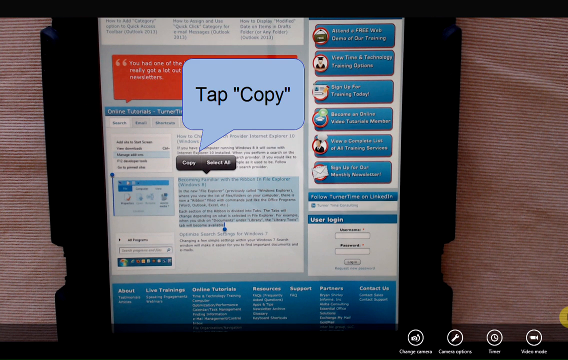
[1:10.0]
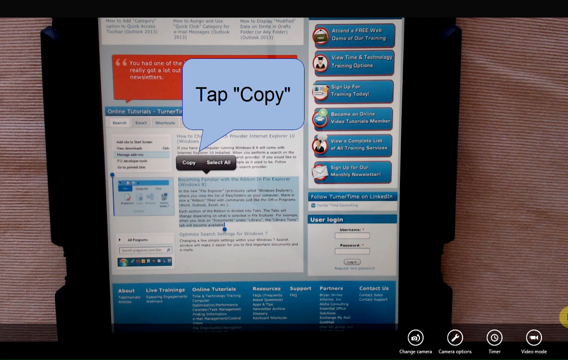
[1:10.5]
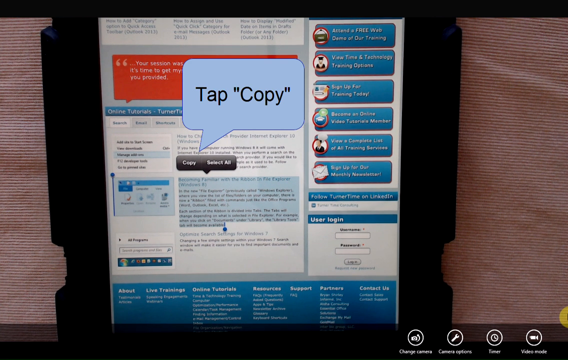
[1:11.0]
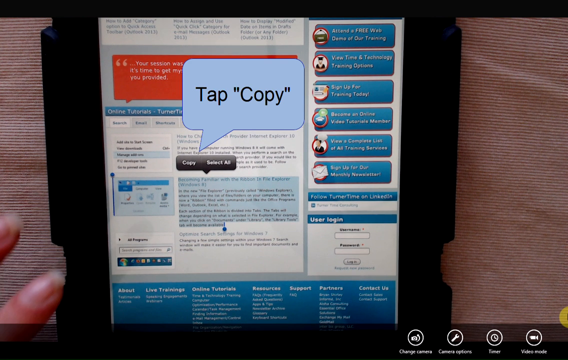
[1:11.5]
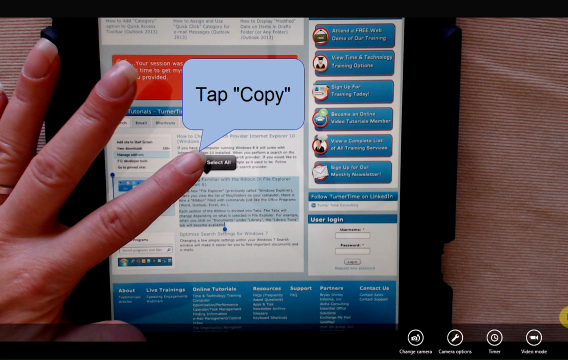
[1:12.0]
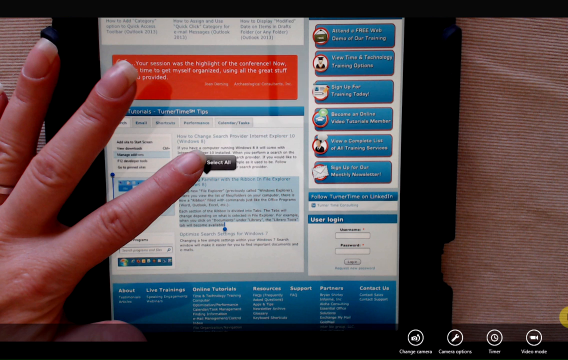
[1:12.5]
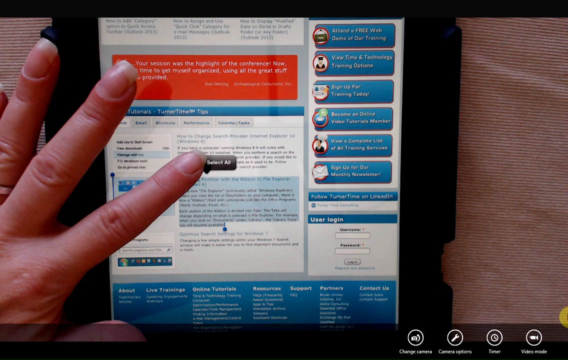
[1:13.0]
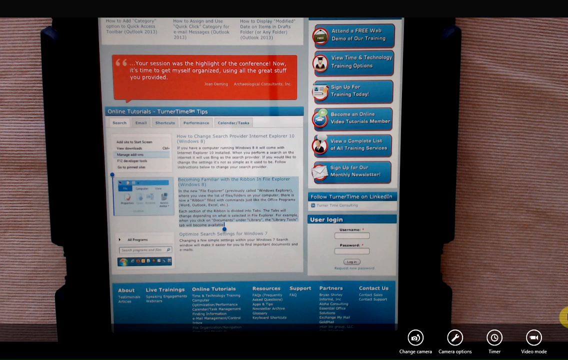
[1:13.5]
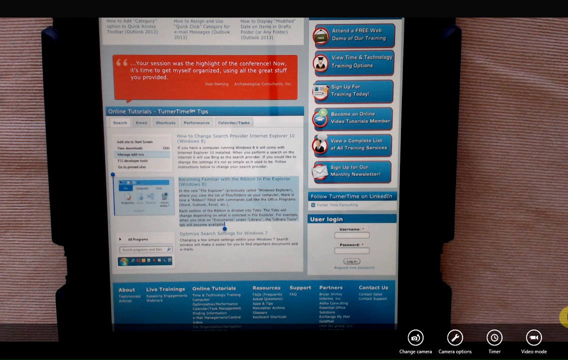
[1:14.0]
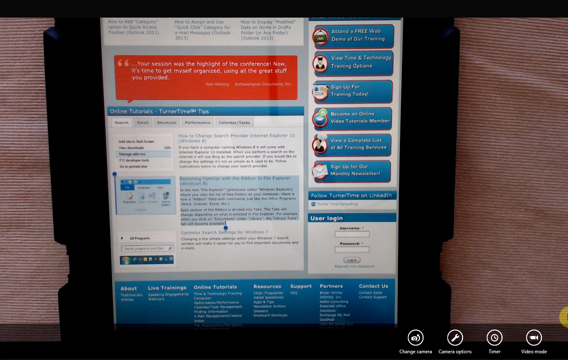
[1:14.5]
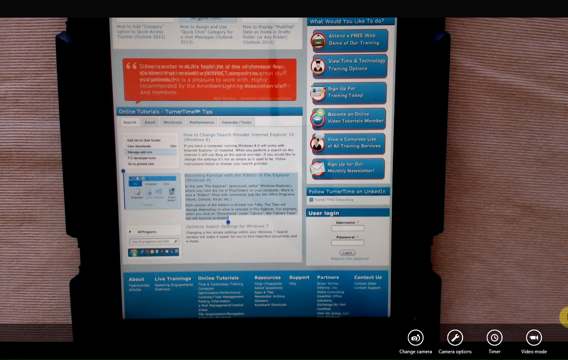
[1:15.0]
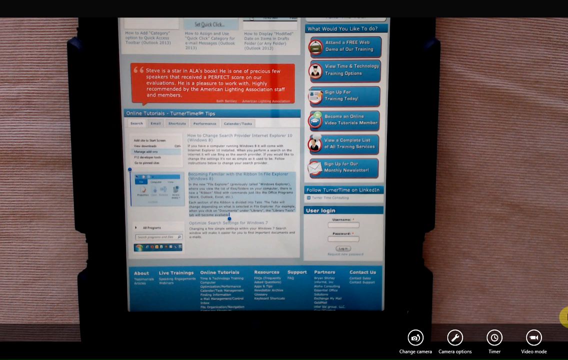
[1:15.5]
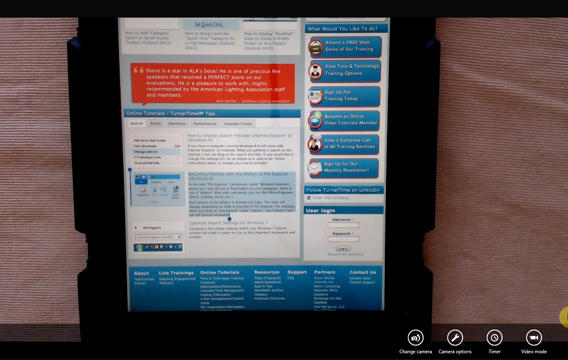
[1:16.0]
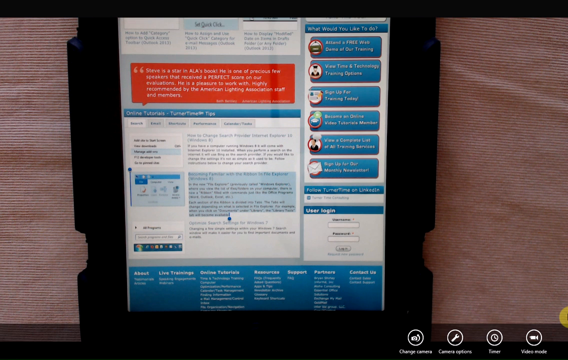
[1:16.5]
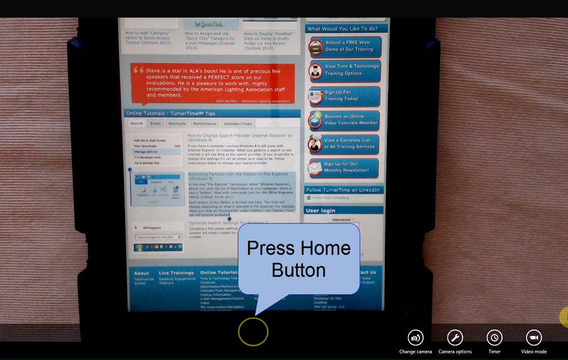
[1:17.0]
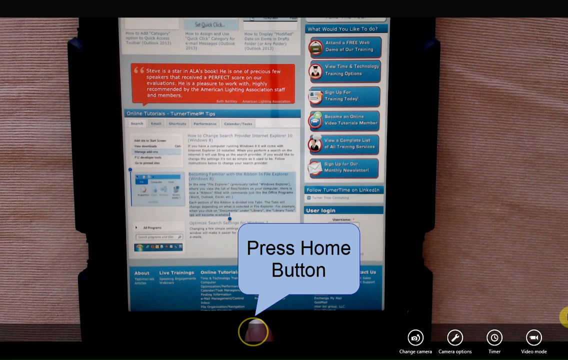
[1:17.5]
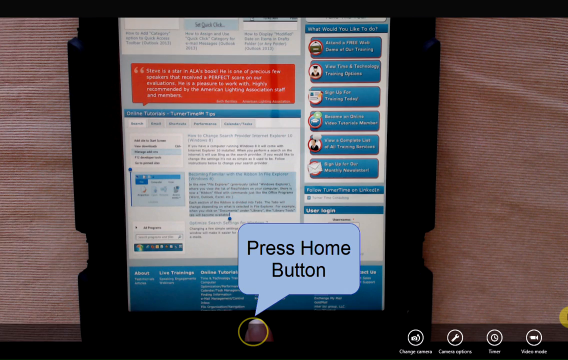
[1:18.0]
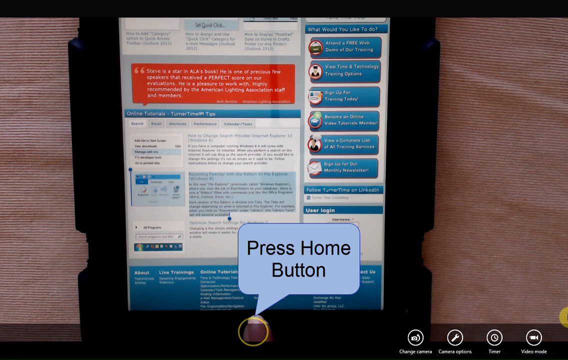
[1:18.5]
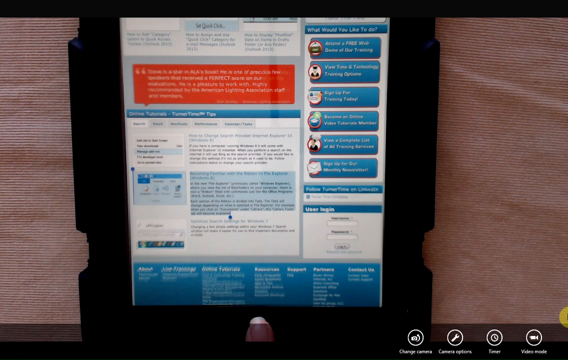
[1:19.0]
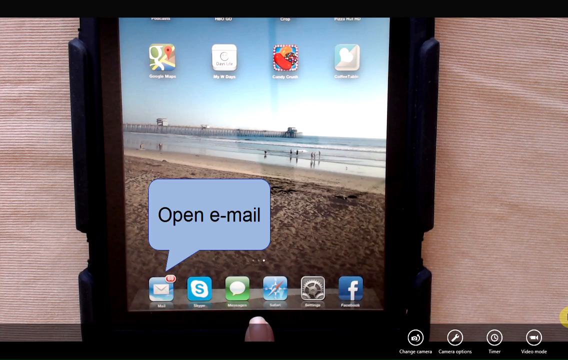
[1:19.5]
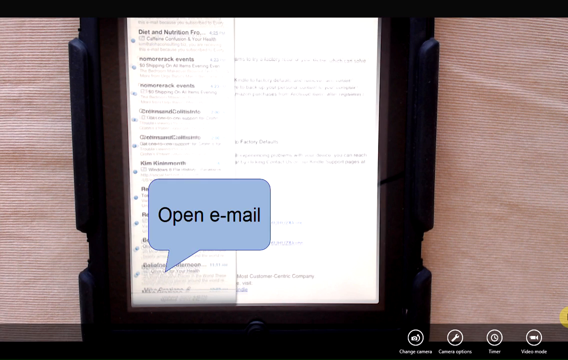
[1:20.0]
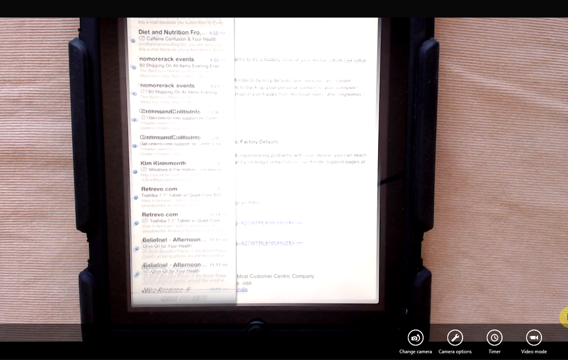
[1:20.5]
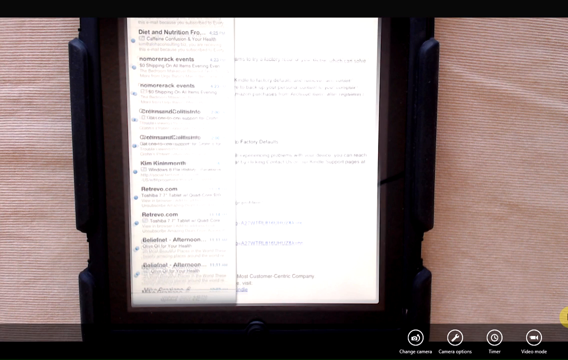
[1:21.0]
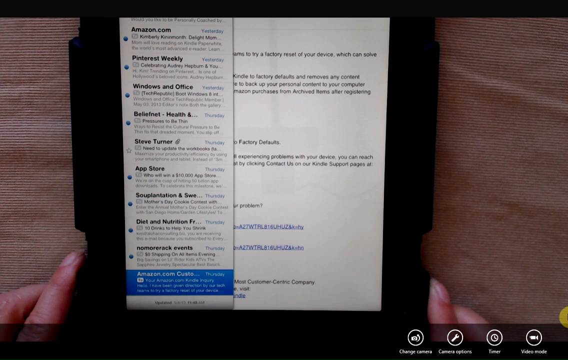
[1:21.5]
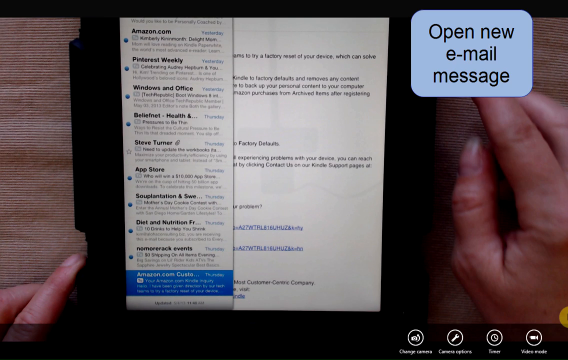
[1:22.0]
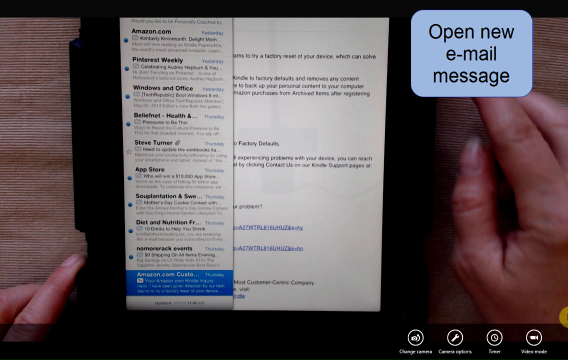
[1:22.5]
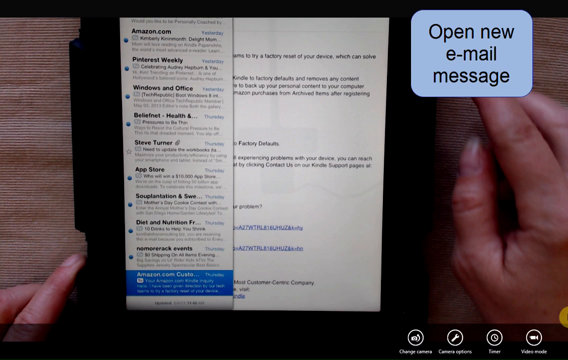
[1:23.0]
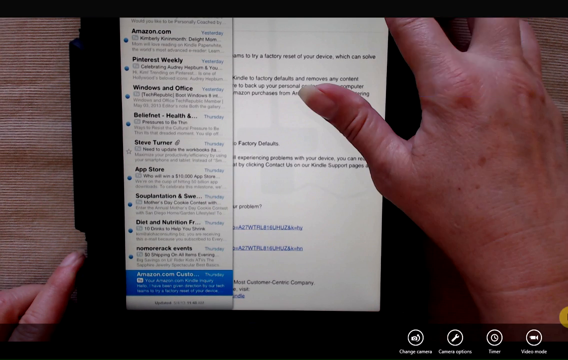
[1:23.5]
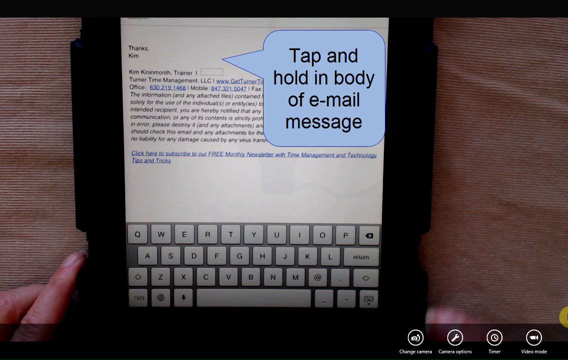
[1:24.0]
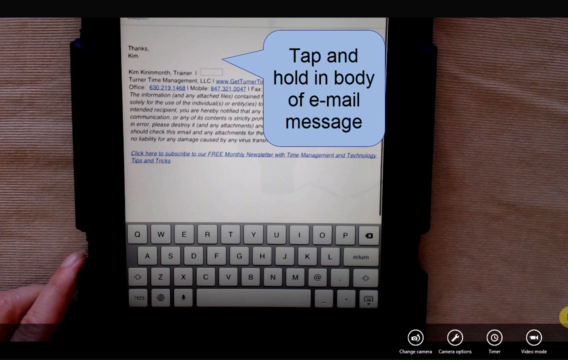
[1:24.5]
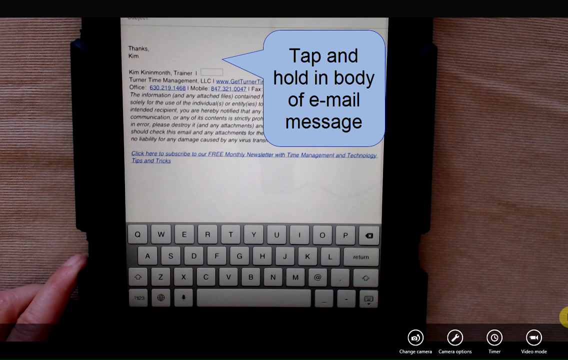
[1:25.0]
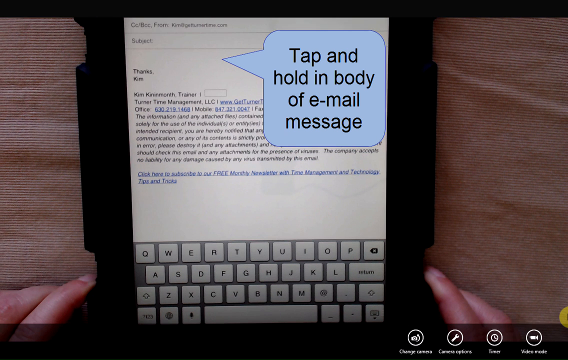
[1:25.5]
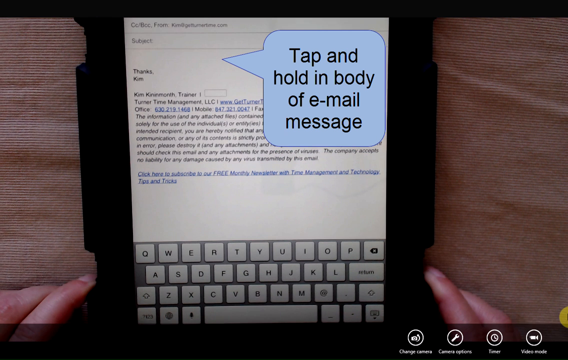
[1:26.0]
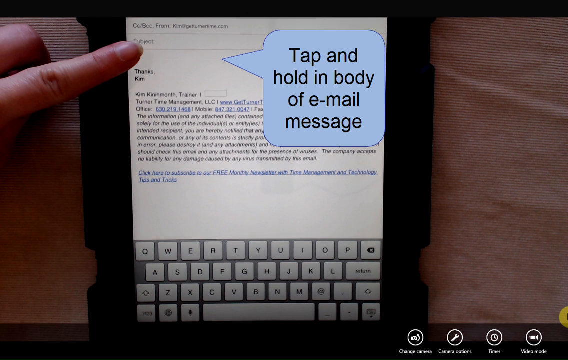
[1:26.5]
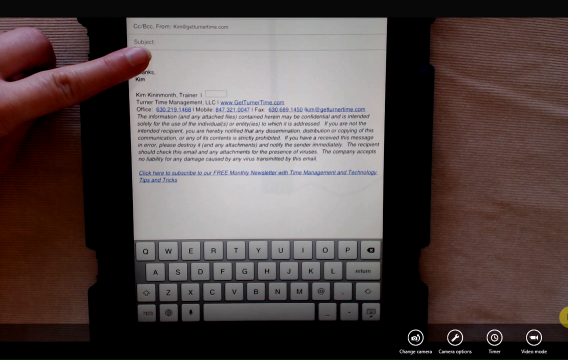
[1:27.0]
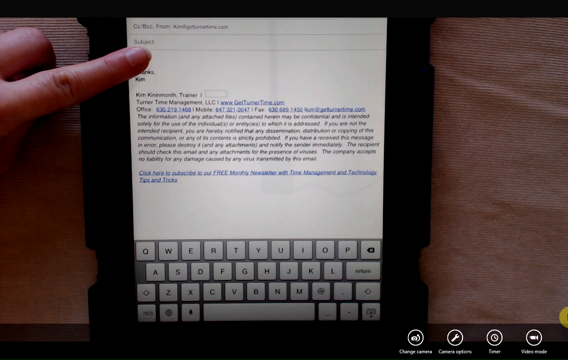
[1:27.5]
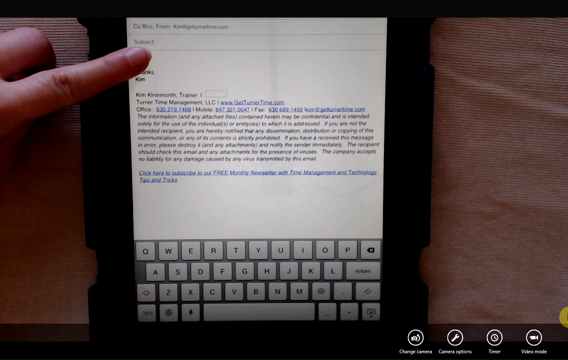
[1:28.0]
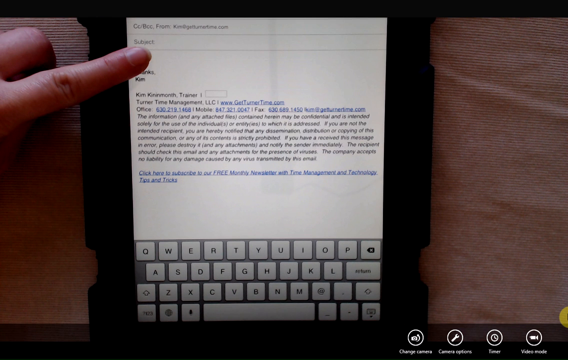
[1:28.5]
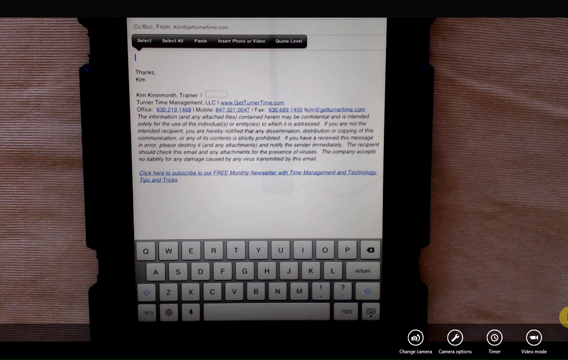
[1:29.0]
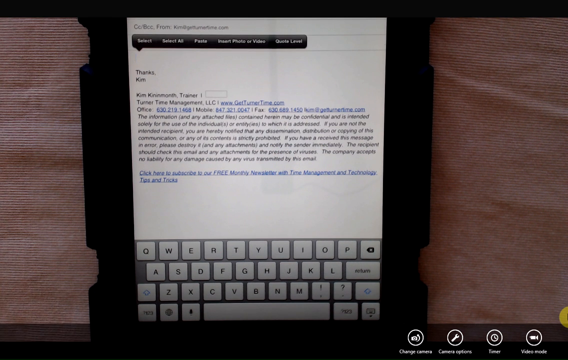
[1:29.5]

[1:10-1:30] The home button is pressed and an email is opened. Text says "open a new email message" and "tap and hold in the body of the email message." With a finger held on the text area, an options menu pops up with nothing selected, offering select, select all, paste, an option to insert a photo or video, and a quote level option.